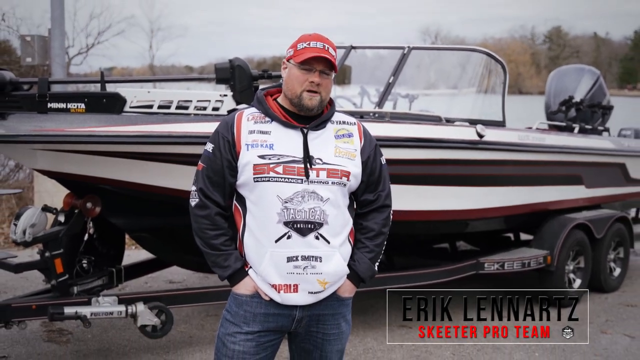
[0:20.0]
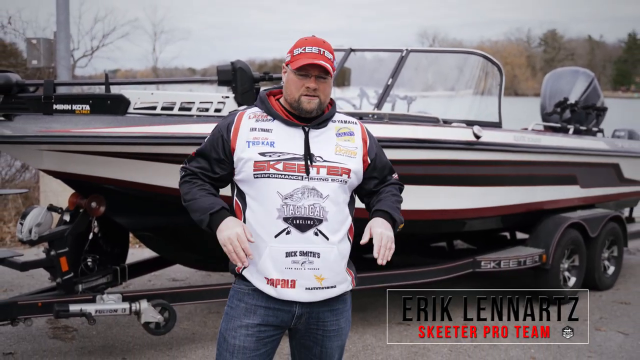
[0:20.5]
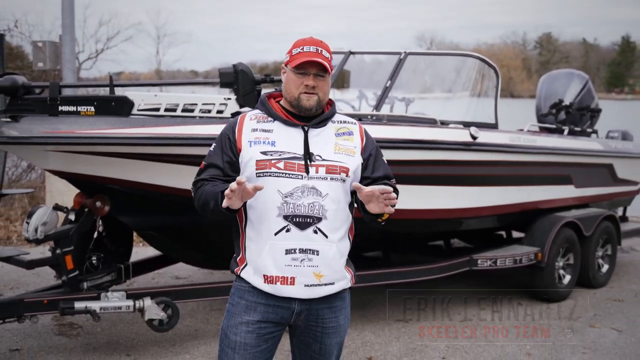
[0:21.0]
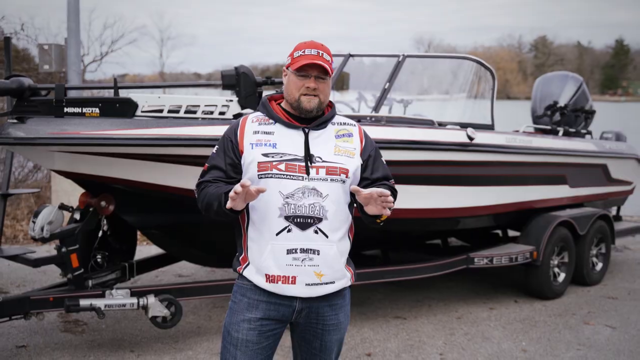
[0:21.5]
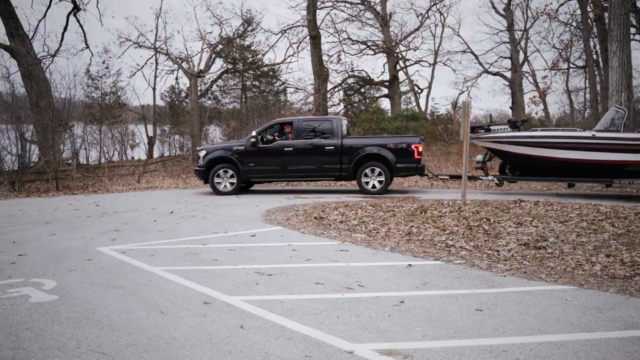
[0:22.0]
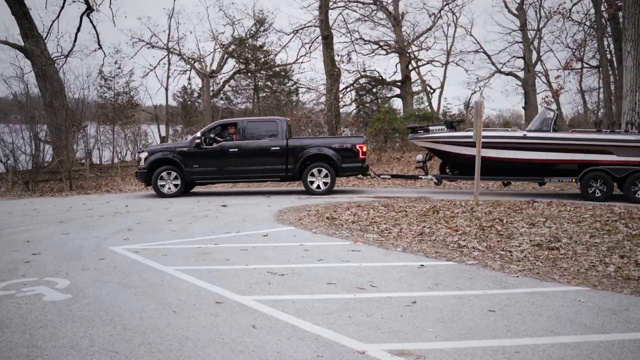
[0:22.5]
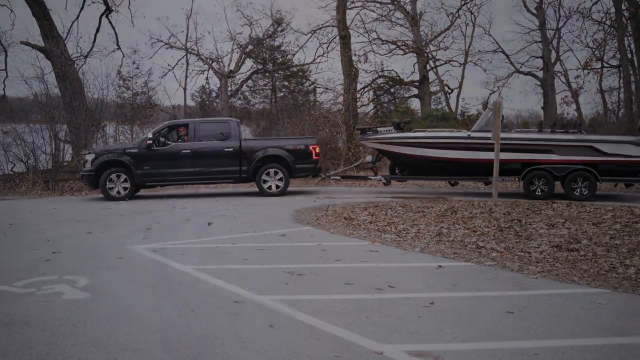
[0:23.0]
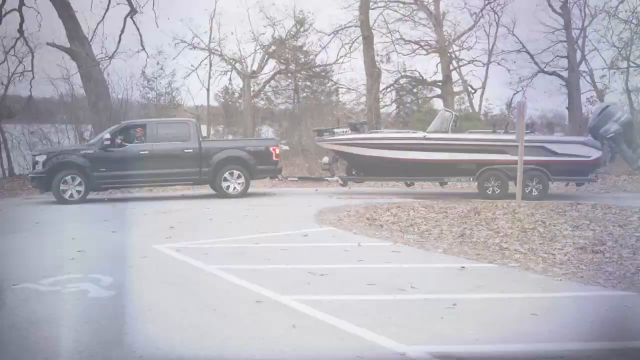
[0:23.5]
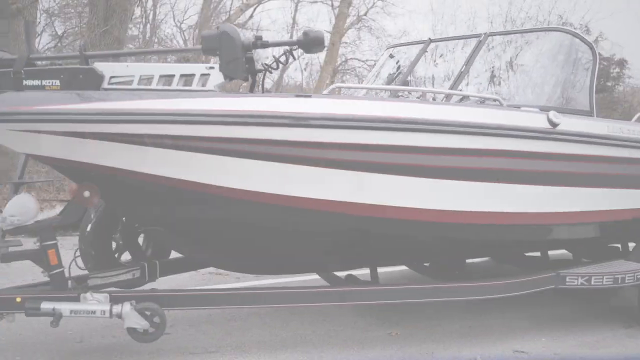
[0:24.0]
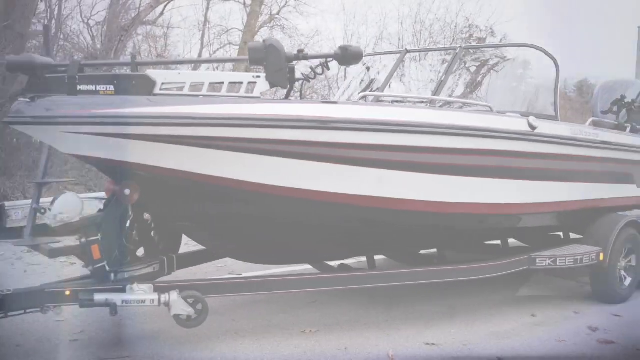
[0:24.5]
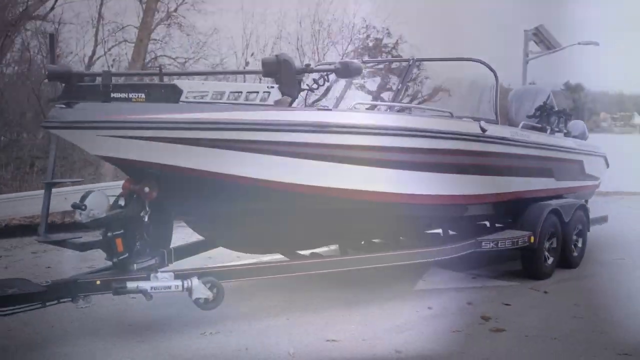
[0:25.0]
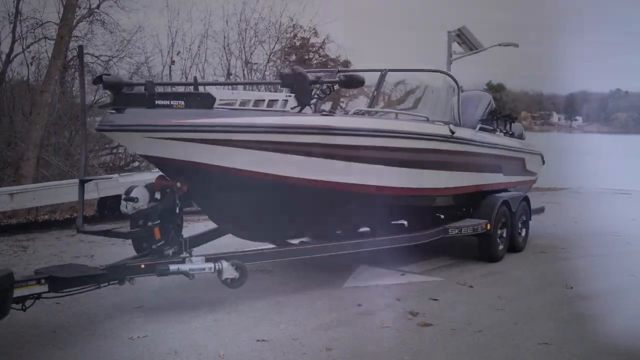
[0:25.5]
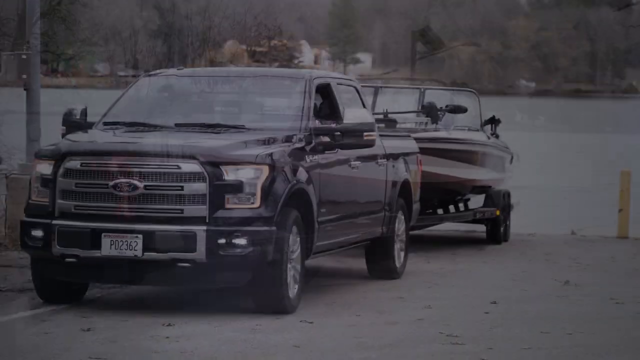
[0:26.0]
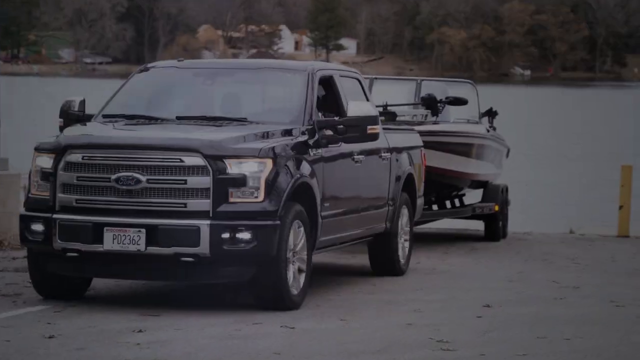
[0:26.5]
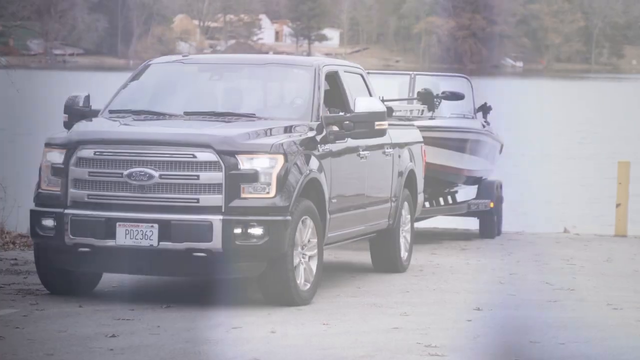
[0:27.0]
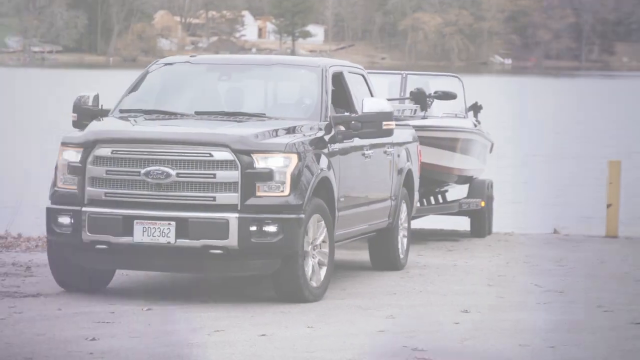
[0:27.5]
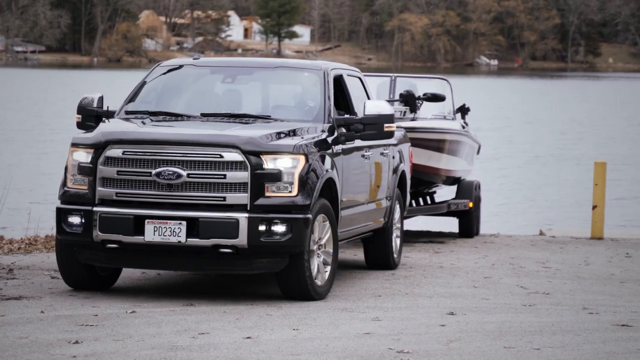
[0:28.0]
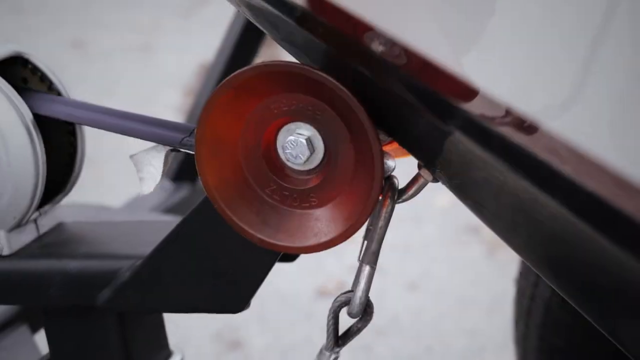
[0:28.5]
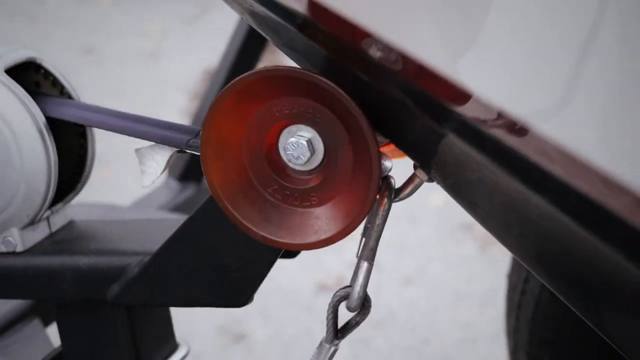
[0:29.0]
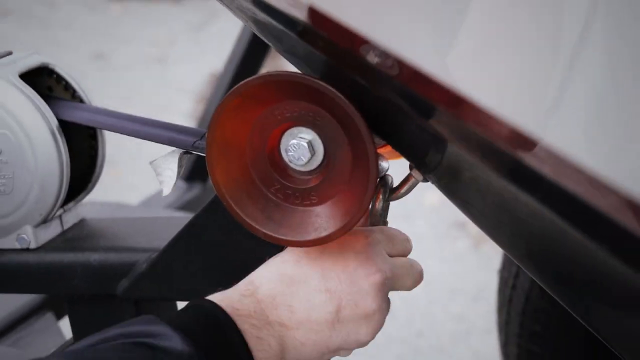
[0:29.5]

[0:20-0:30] A man talks on screen, with his name listed in the lower right corner as "Erik Lennarts" and text saying he is part of the Skeeter Pro Team. He wears a white shirt with black sleeves covered in logos, including the Skeeter logo, and a red cap with "Skeeter" across the front. A Skeeter boat is on a boat dock and looks like it is being prepared to be launched into the water. The day is overcast.